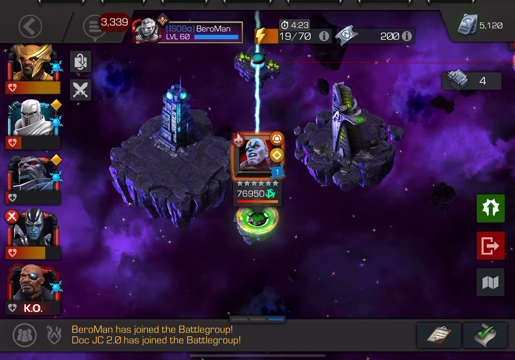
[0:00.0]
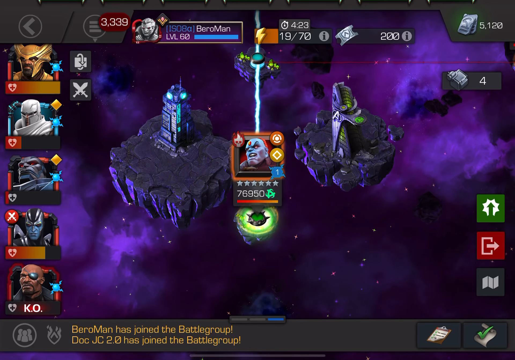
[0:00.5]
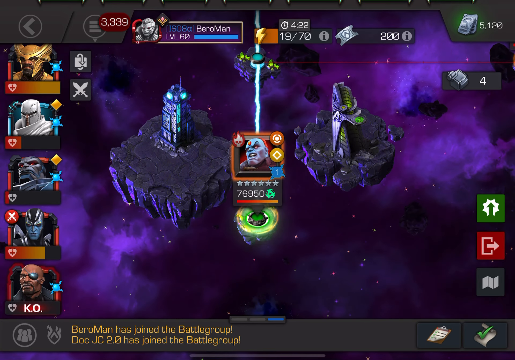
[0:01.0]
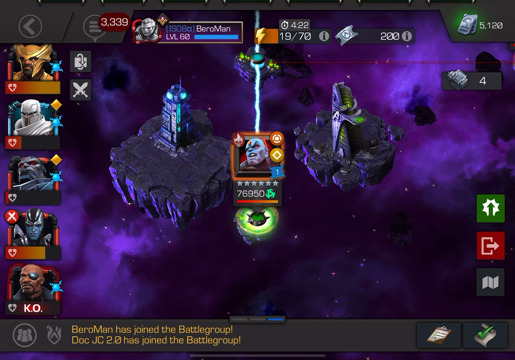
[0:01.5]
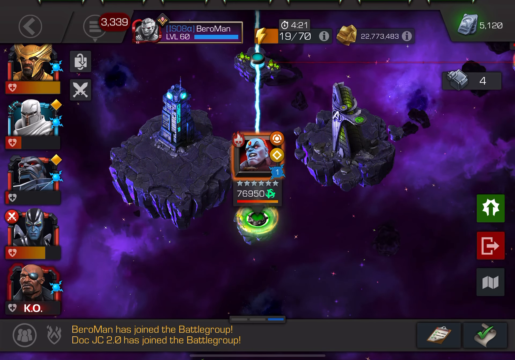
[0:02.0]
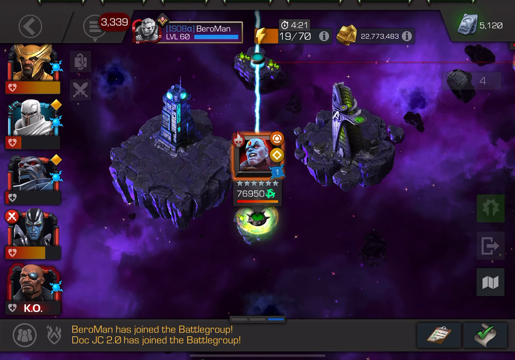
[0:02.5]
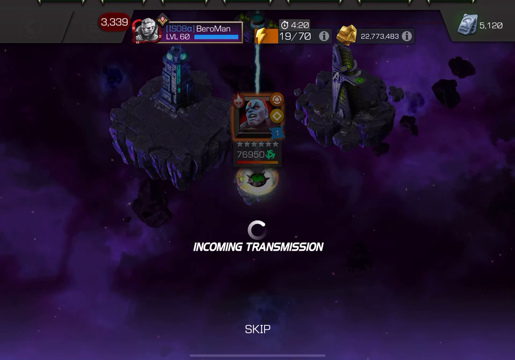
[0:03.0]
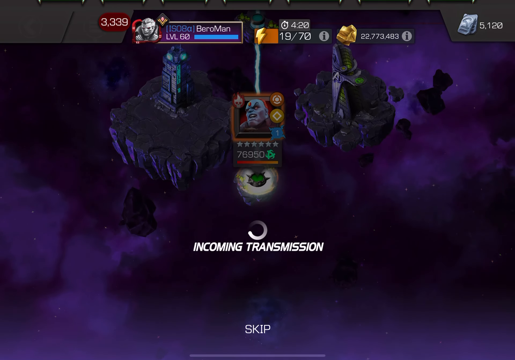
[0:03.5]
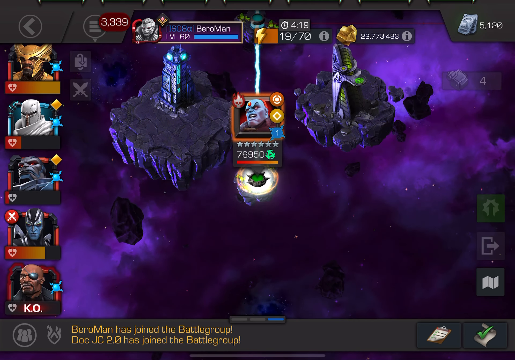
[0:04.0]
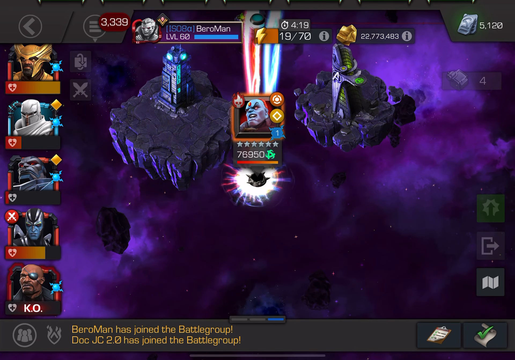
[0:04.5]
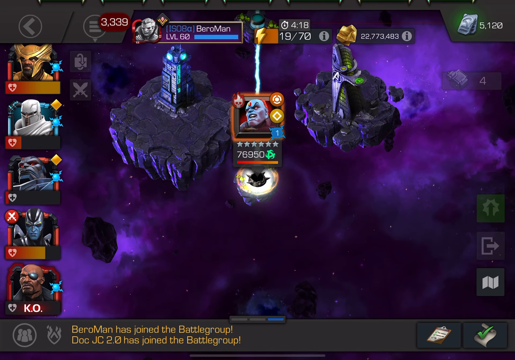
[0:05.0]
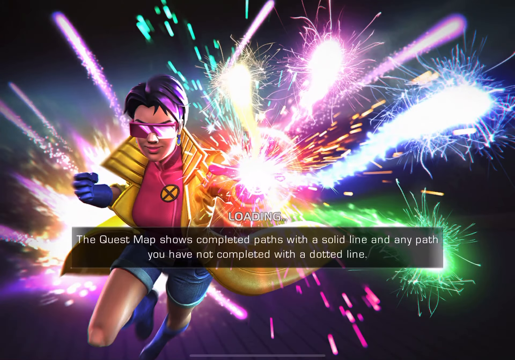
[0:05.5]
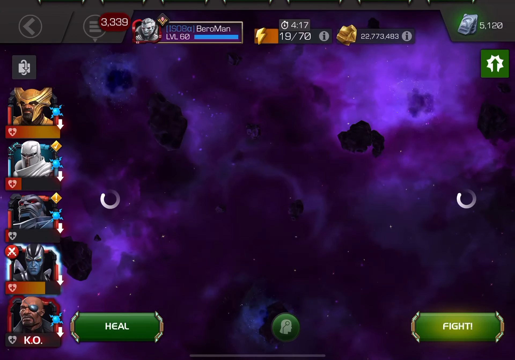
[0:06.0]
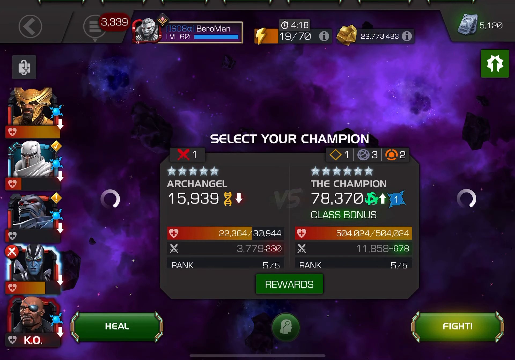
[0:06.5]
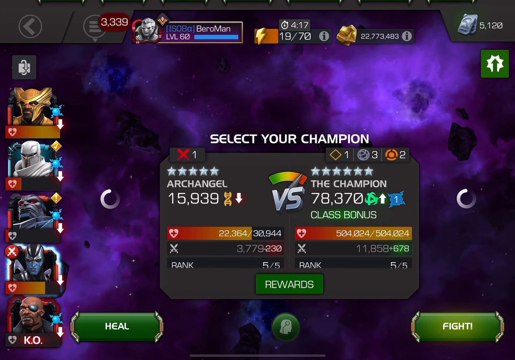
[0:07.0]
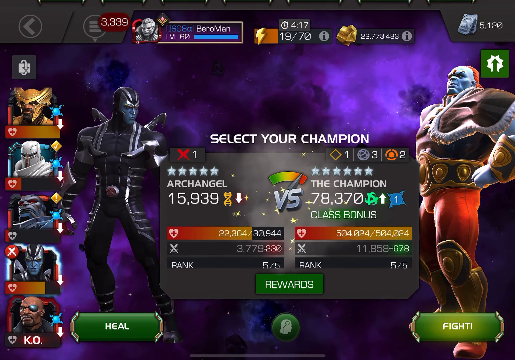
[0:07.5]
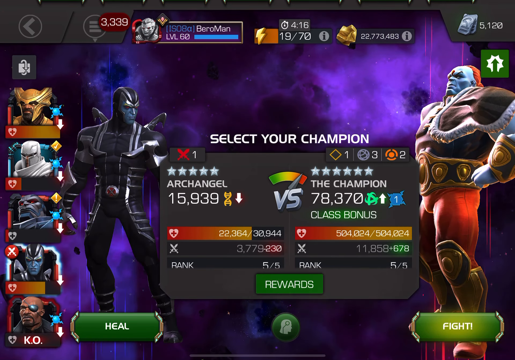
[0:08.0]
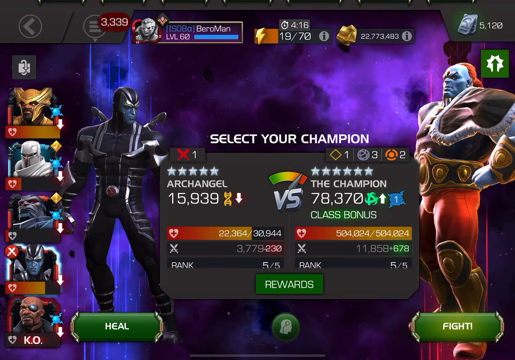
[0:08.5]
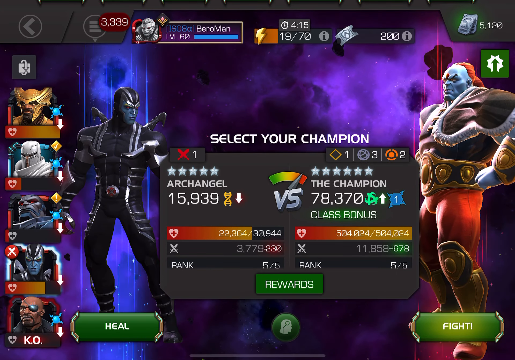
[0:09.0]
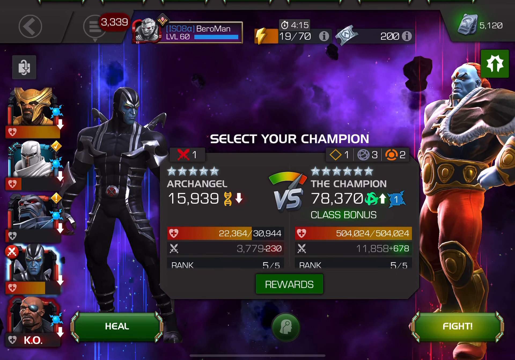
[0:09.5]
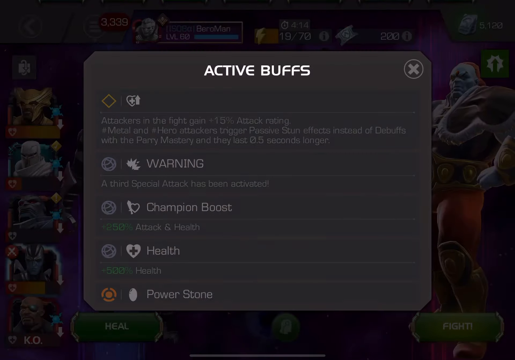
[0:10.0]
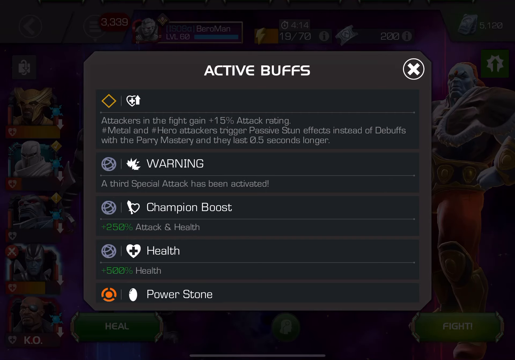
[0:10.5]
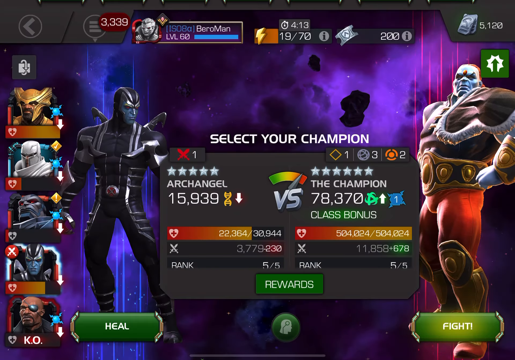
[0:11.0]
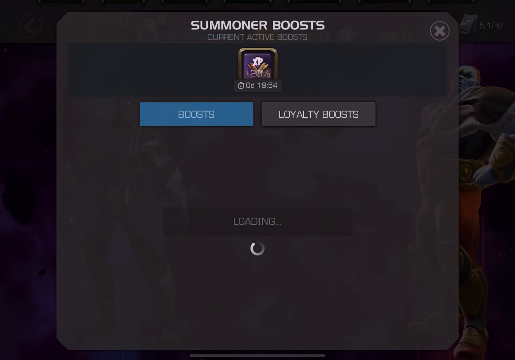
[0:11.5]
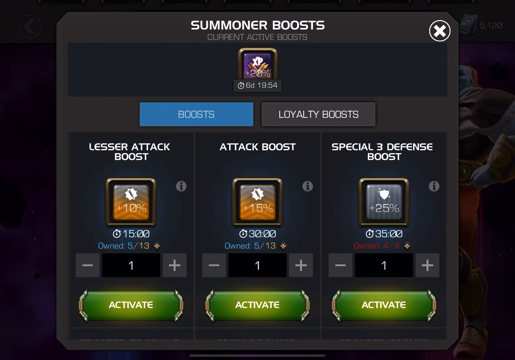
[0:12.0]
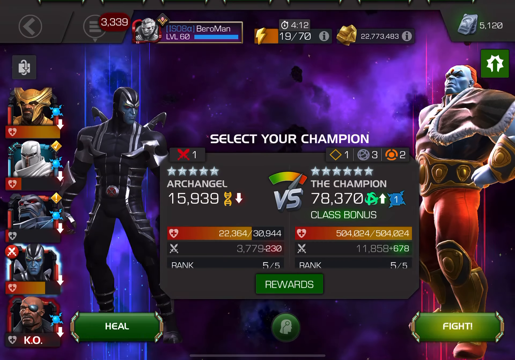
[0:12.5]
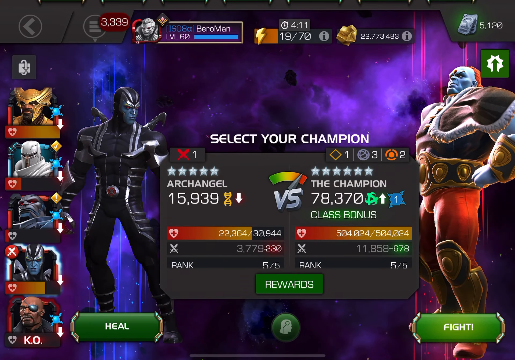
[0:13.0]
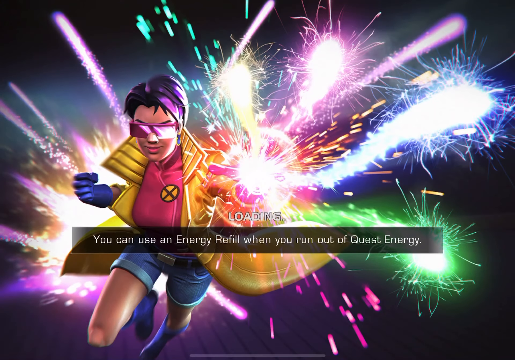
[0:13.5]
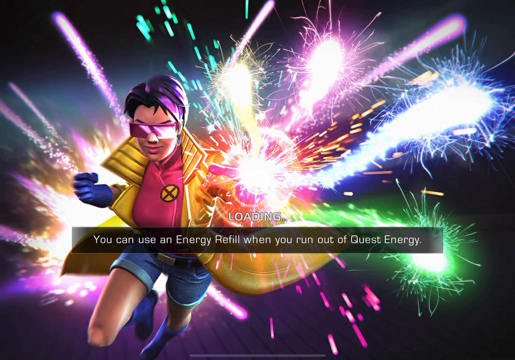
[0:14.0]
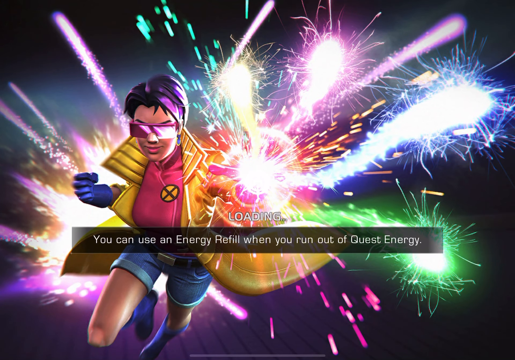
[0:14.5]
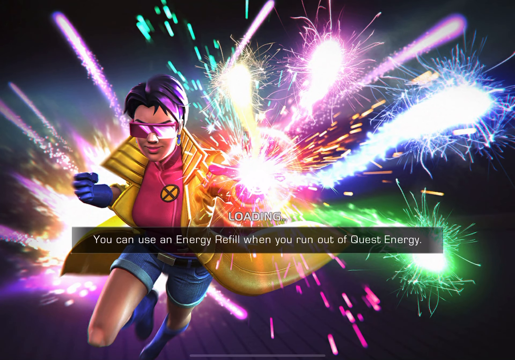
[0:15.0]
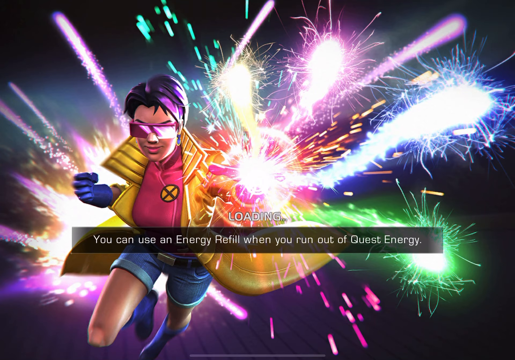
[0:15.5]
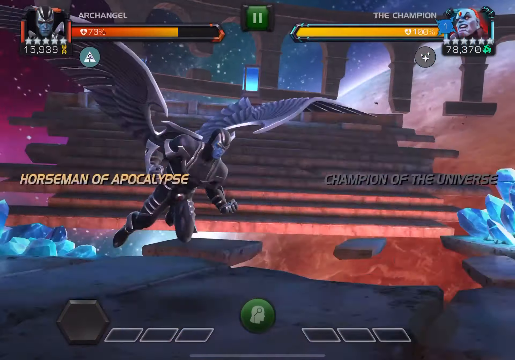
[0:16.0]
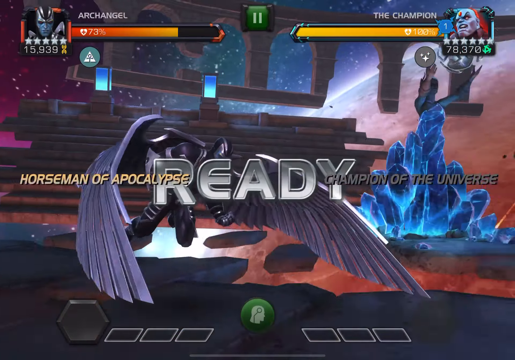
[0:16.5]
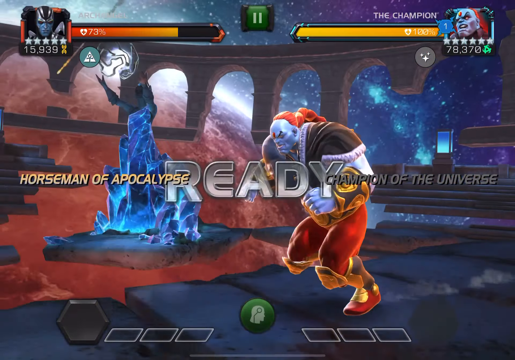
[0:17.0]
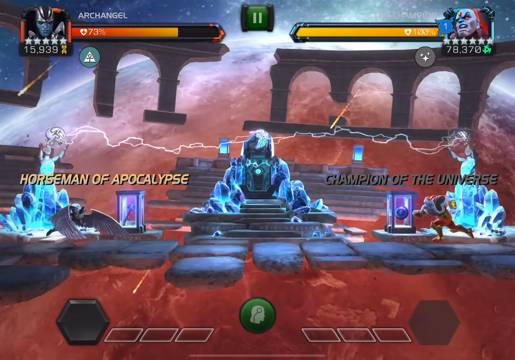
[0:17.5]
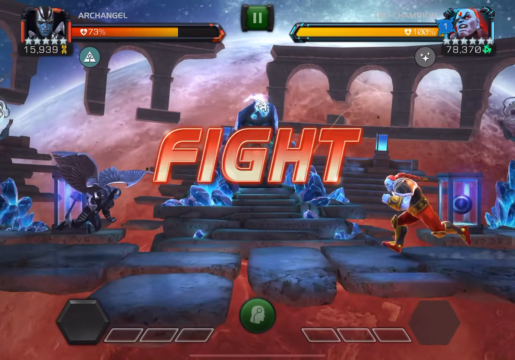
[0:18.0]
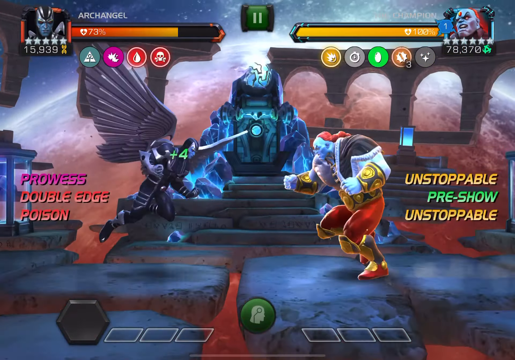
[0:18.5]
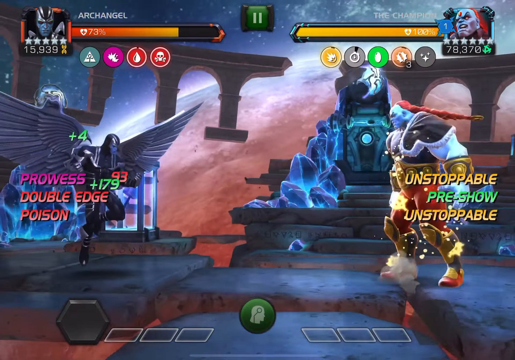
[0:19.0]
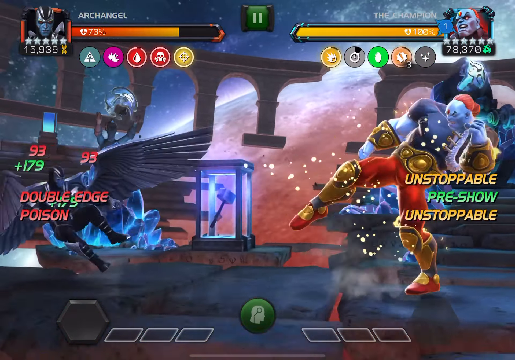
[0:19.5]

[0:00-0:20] What appears to be some kind of app game opens on what looks like an alien man with an orange gem in his forehead, apparently an icon for this player, in the middle of a map, with different icons on the left. An incoming transmission appears, and a new page seems to load, suggesting some kind of X-Men game. The game moves through different menus, including a versus screen, and a loading screen with what looks like Jubilee on it. It is a 3D, competitive fighting game, apparently X-Men based. Before the fight starts, the screen says "fight" and shows Archangel versus a second fighter whose name is unreadable. Words pop up on the screen, including "prowess", "double edge", "poison" and "unstoppable", apparently the traits of either fighter. The two players then fight back and forth, with the health bars at the top left and right for each player.